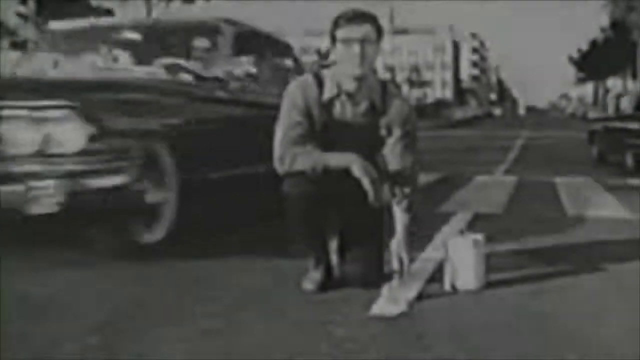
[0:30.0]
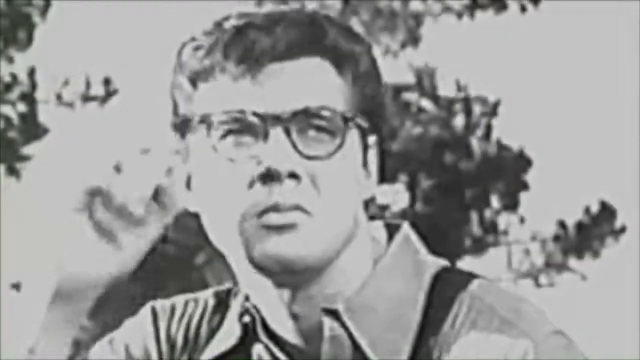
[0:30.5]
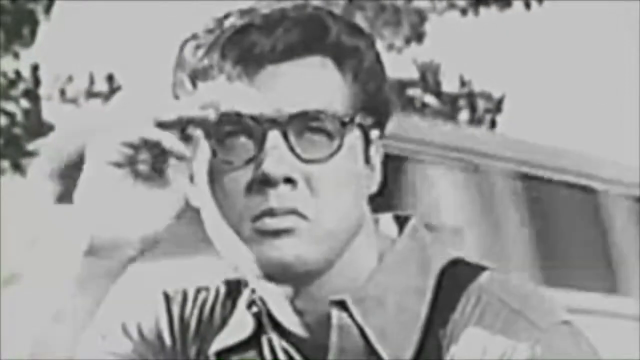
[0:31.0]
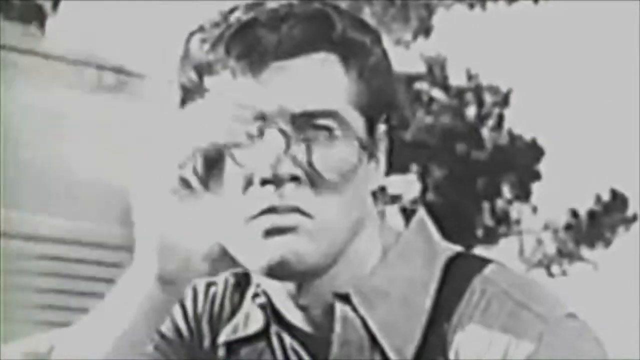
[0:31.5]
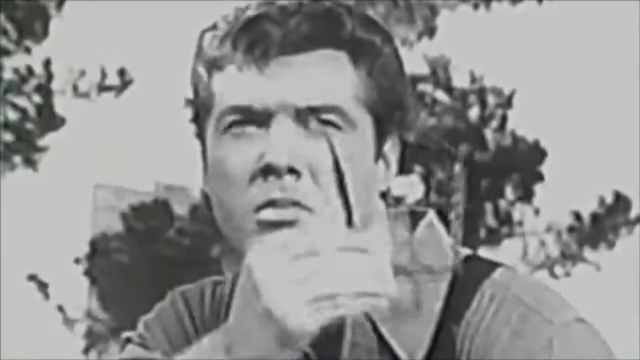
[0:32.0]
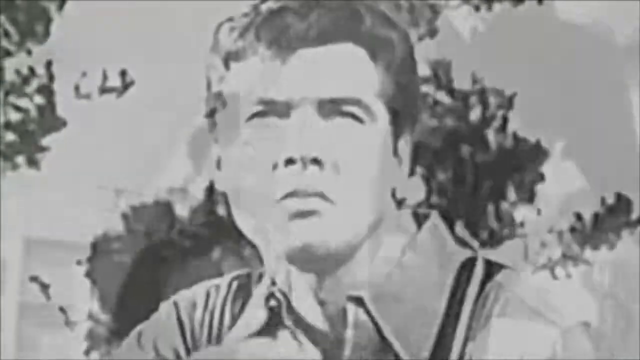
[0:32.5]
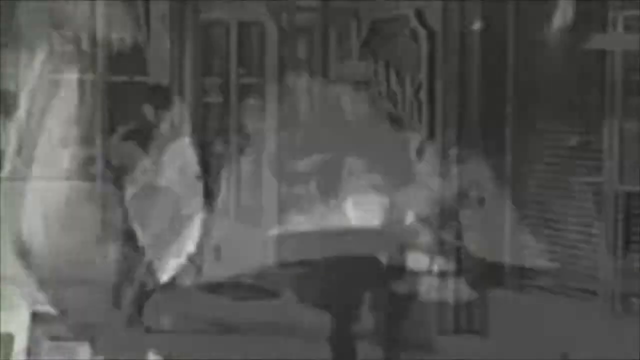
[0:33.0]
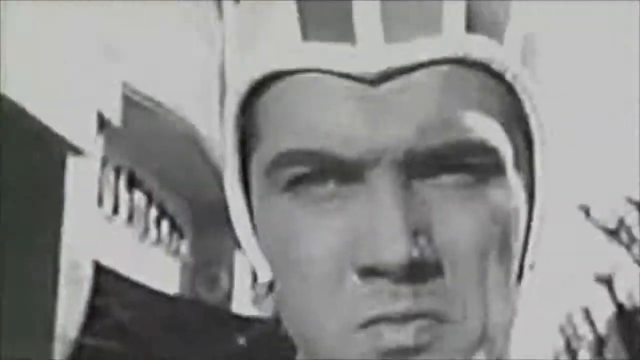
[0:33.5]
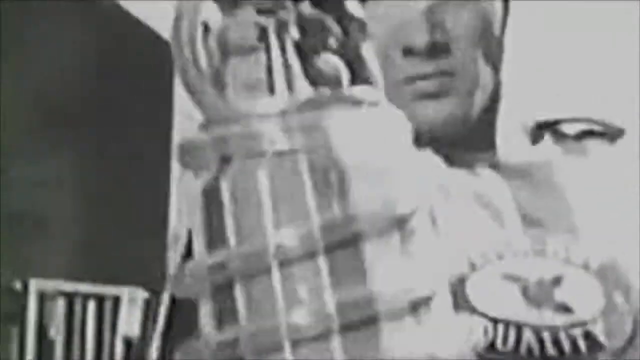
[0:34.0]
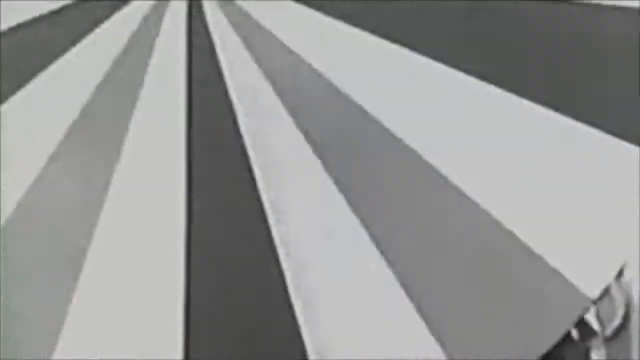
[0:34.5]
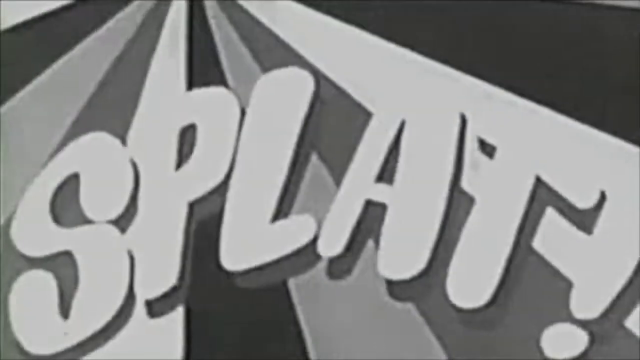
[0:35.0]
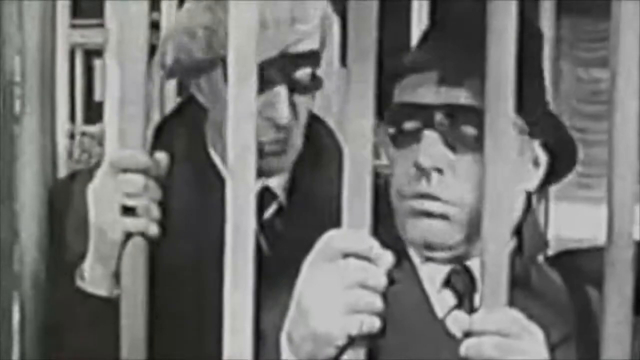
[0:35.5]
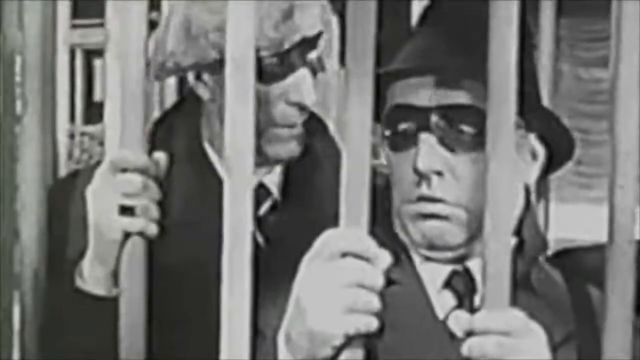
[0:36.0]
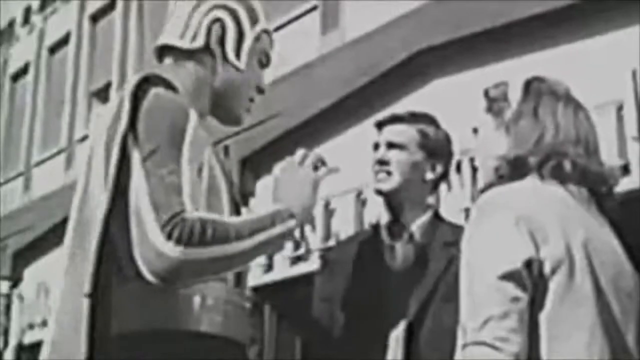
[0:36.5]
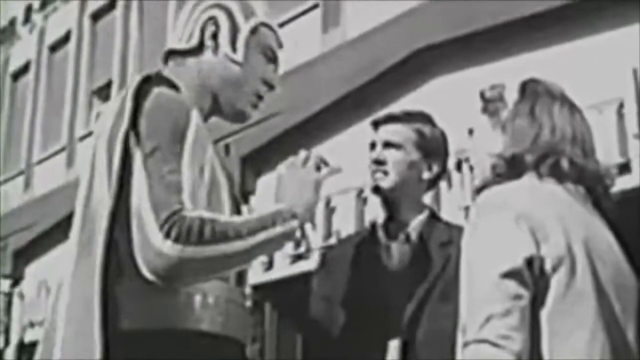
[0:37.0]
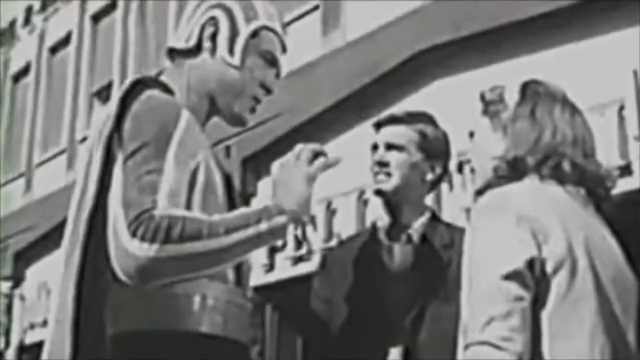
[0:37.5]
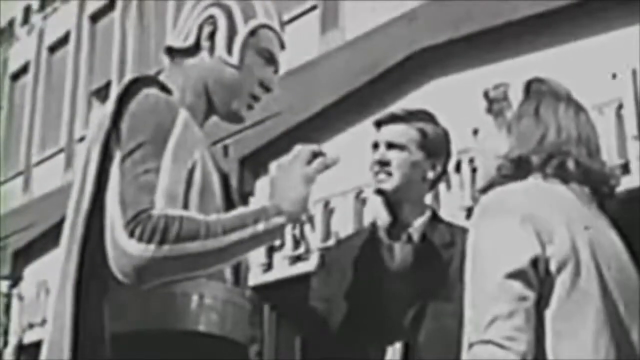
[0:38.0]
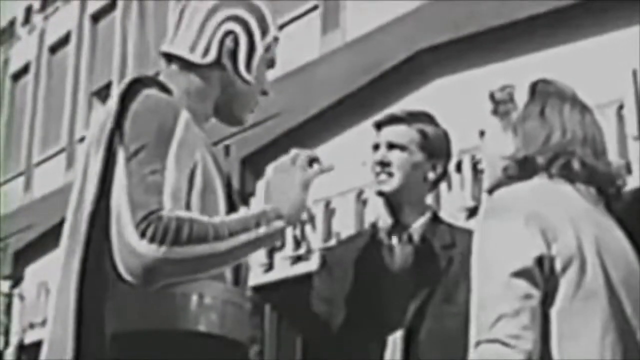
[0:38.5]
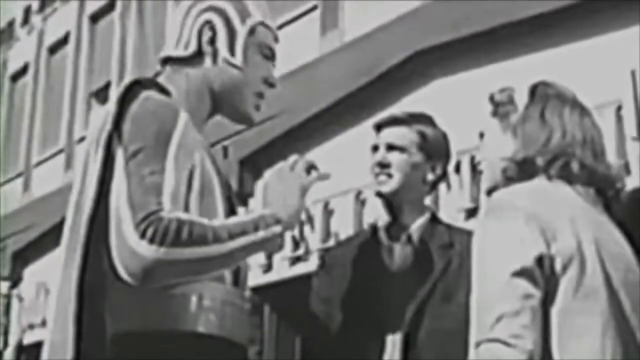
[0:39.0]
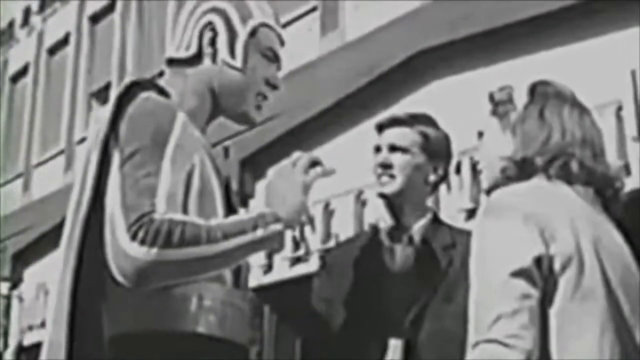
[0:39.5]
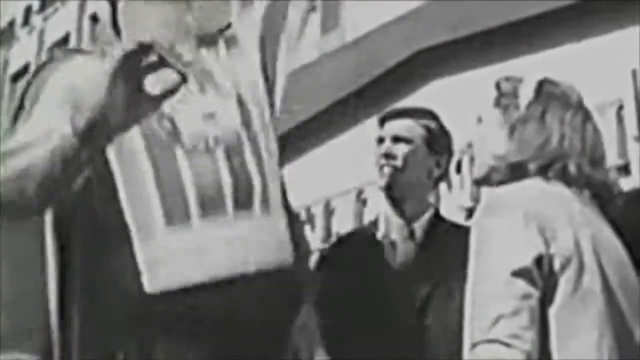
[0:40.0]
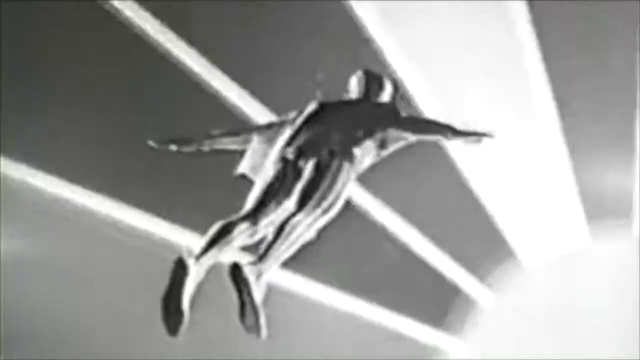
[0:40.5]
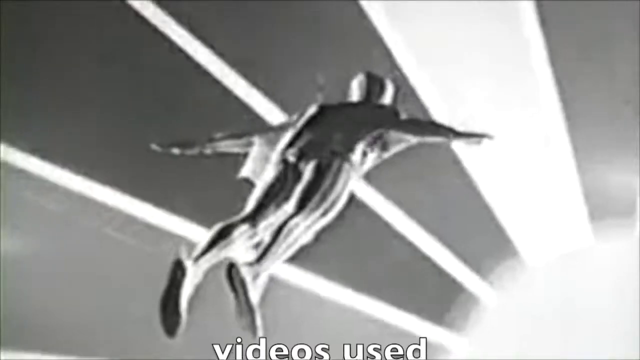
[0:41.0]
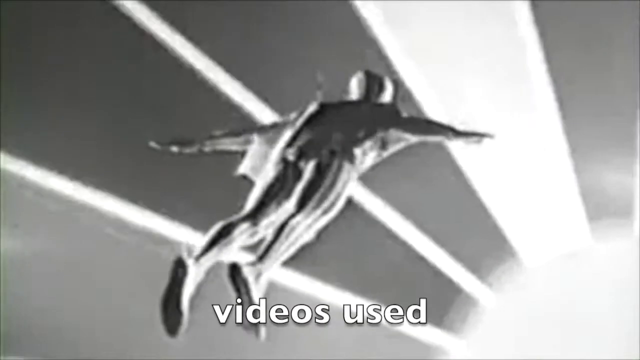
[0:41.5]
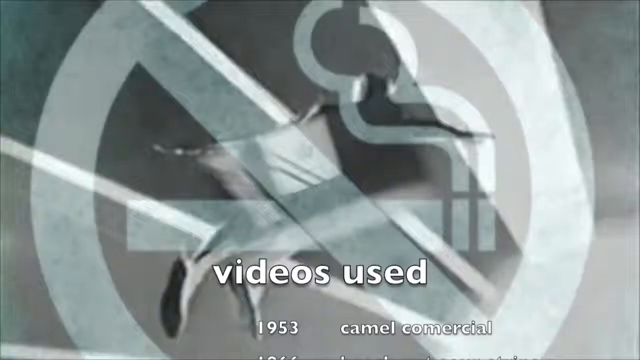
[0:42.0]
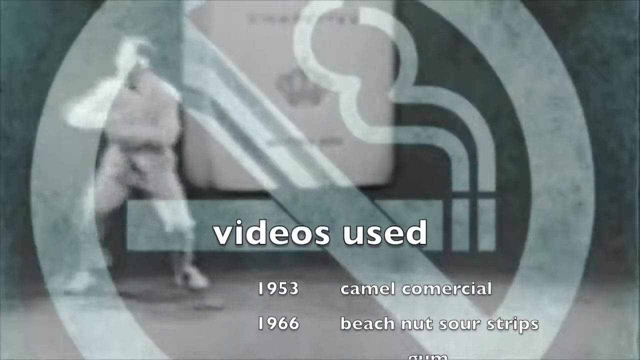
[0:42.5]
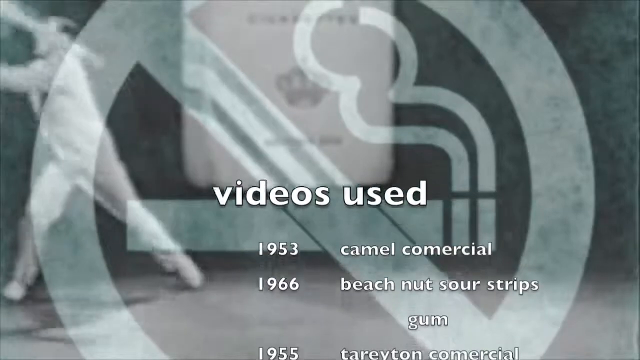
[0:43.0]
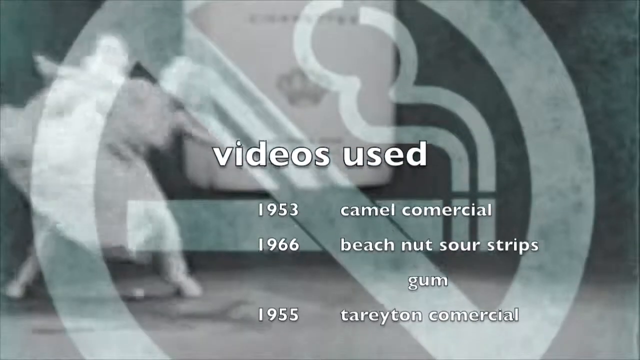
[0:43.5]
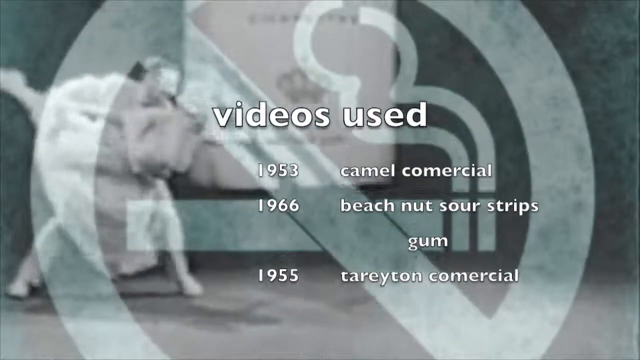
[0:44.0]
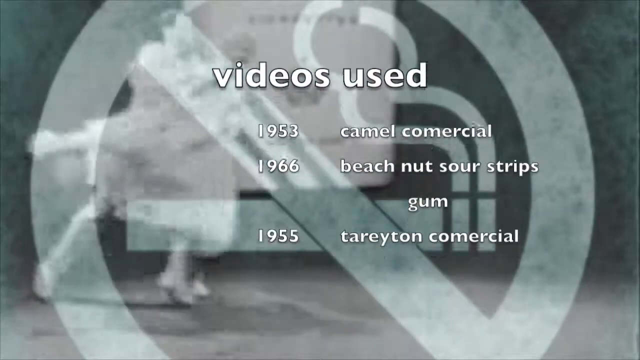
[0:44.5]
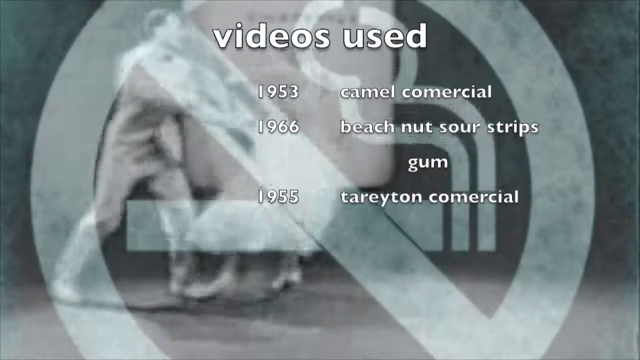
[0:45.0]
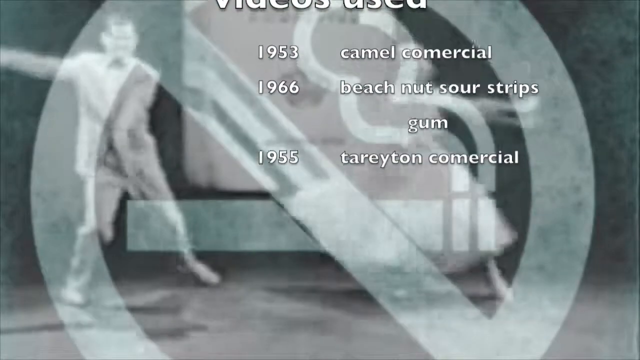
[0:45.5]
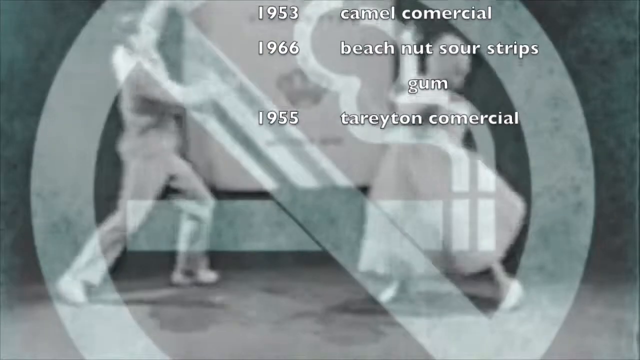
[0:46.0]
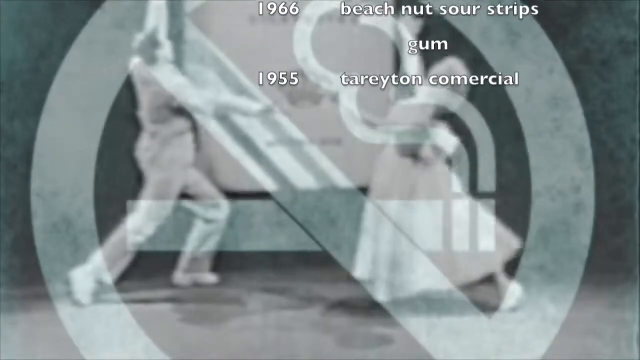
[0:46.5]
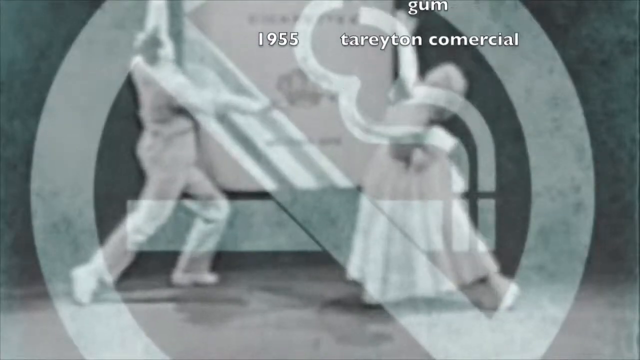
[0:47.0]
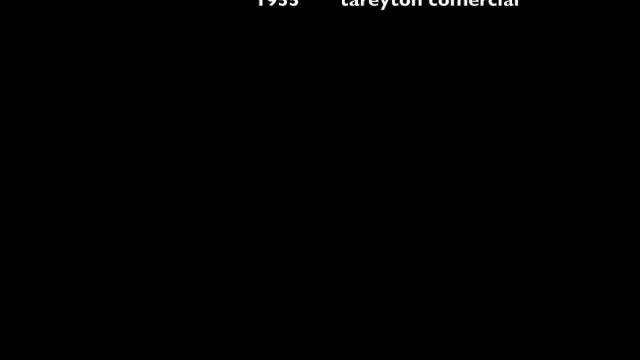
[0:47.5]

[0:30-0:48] A black-and-white television movie or commercial shows a young white man in his twenties wearing dark glasses. He removes his glasses as he looks down the street at someone with a spray can of a substance. A black screen with big white letters and vertical white lines appears. Two white men are then shown in jail, holding the bars of the cell doors. The scene changes to a street outside, where a young man of about 20 with short hair and a woman in a white overcoat stand talking to a man dressed in a chrome-colored uniform. He raises his hands as he speaks to them and shows them something in his hand, then jumps and flies into the air. On-screen text reads "Videos used, 1953 commercial. Camel, 1966. Beech-nut-sour-drip-gum, 1955. Terryton commercial." A picture of a man and a woman dancing is shown.